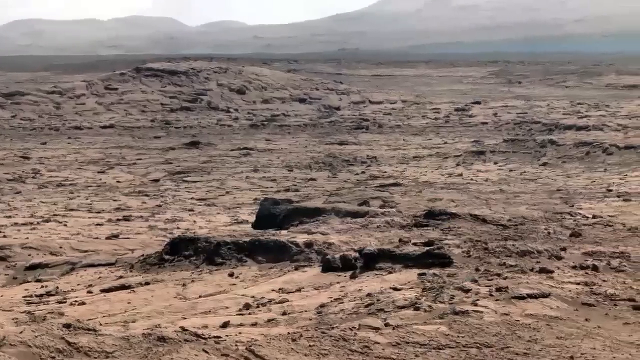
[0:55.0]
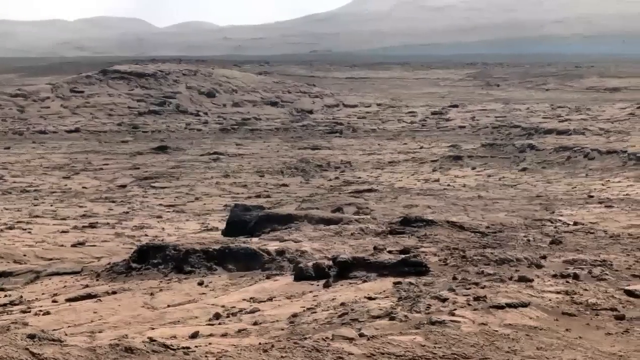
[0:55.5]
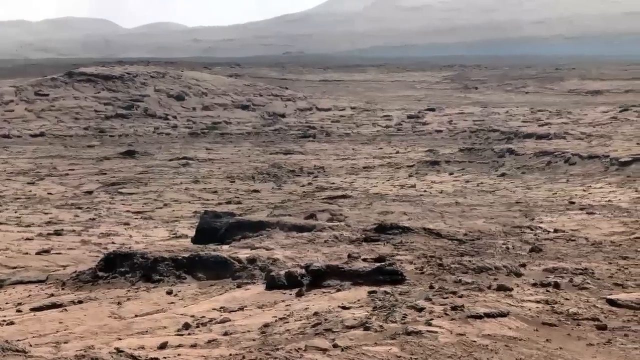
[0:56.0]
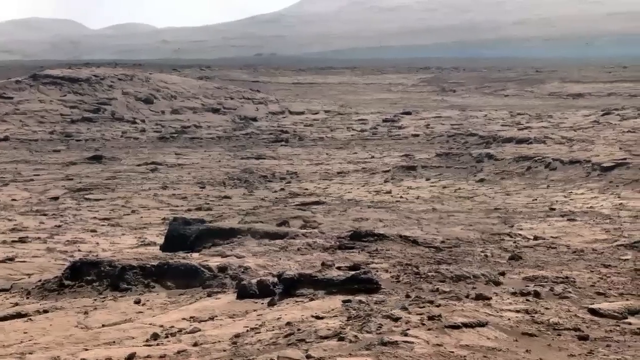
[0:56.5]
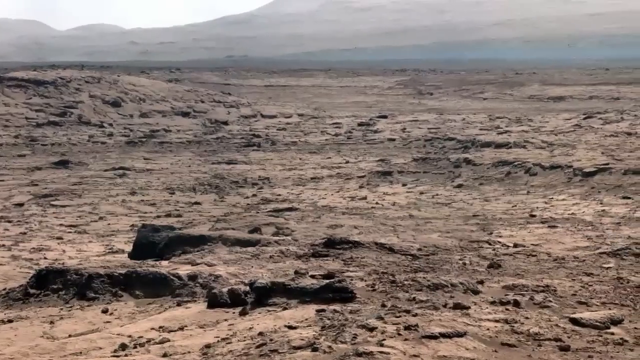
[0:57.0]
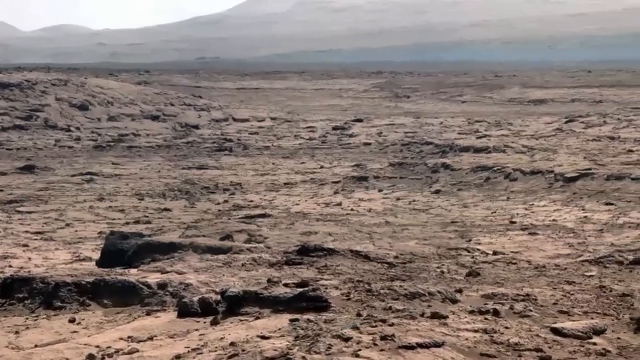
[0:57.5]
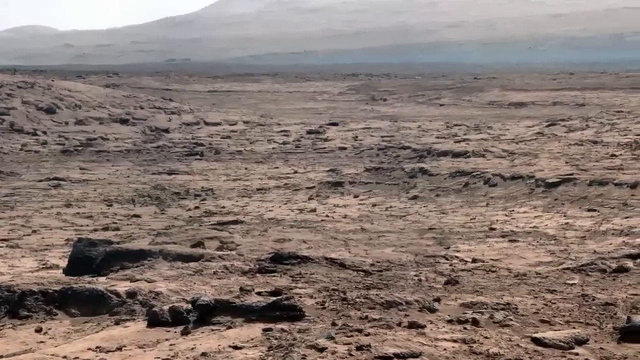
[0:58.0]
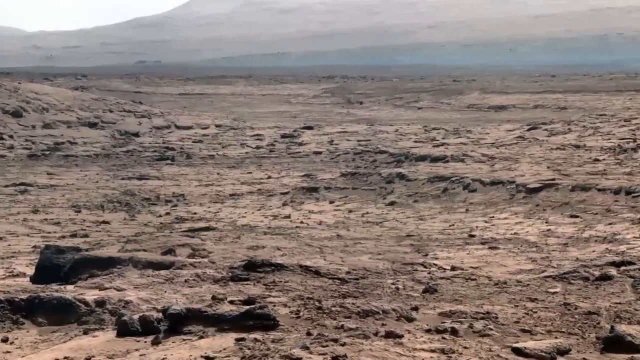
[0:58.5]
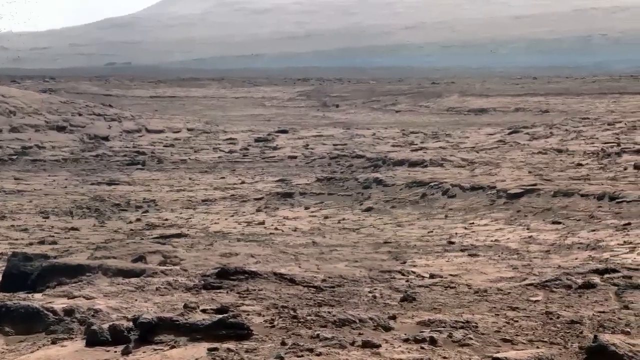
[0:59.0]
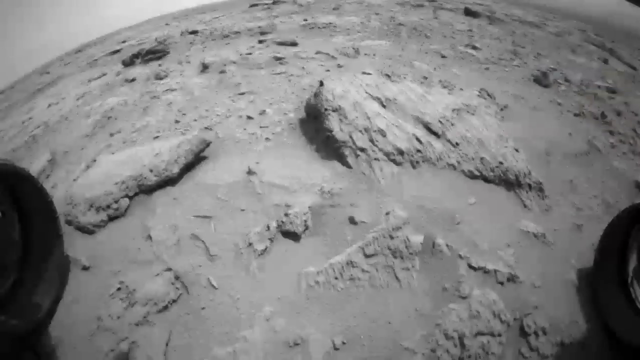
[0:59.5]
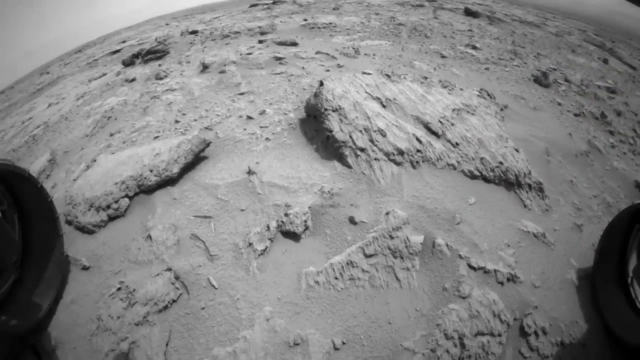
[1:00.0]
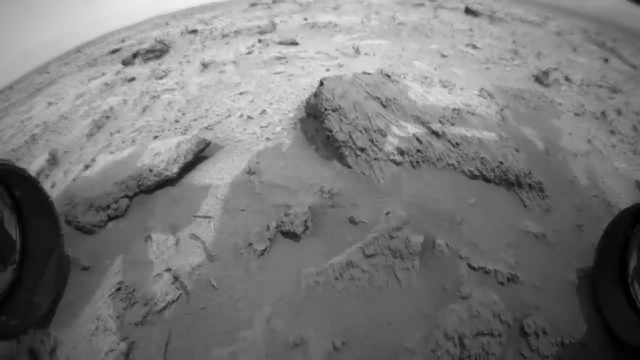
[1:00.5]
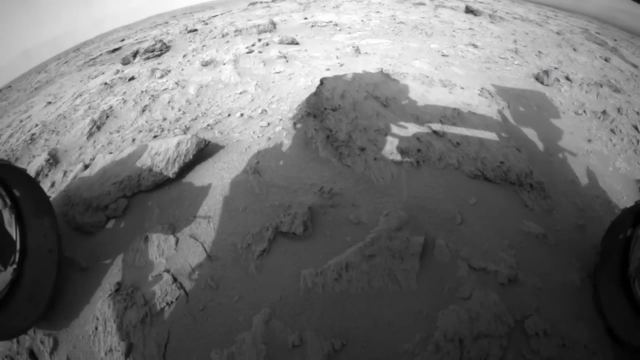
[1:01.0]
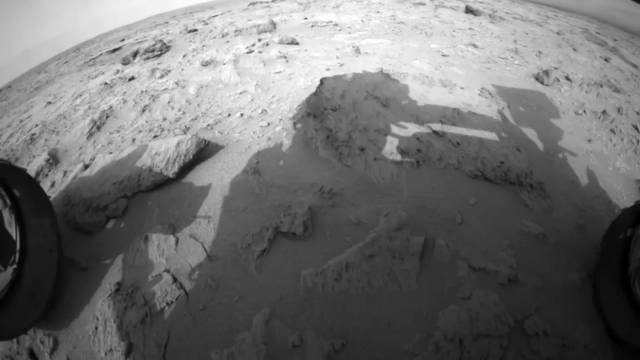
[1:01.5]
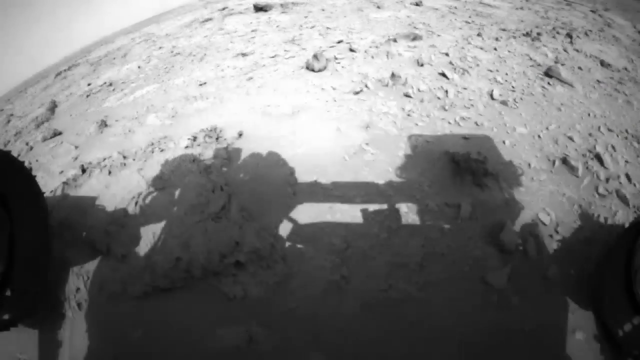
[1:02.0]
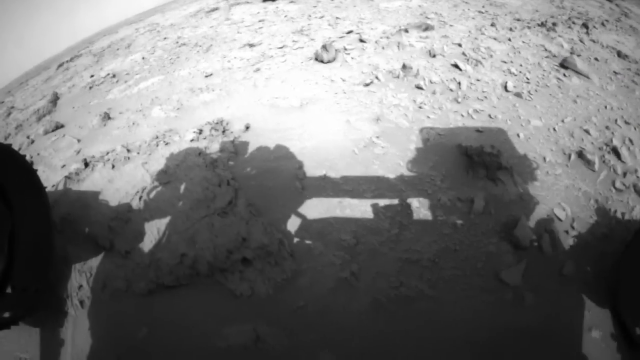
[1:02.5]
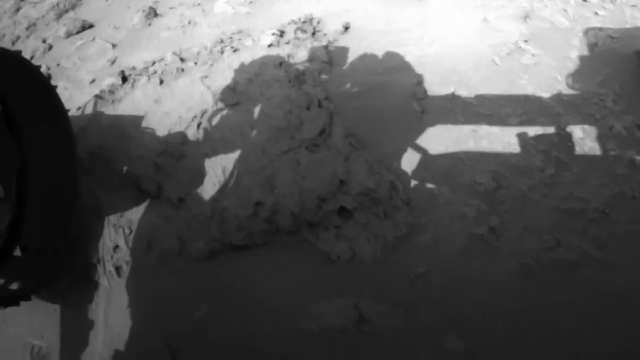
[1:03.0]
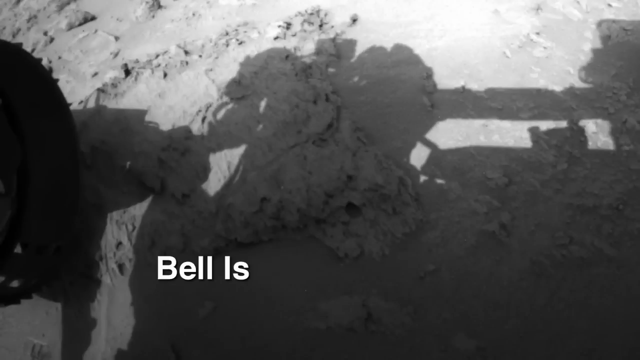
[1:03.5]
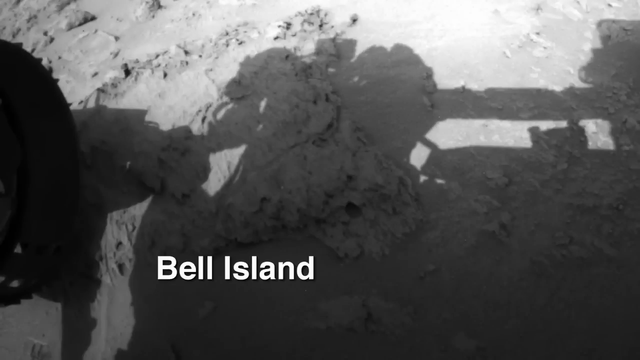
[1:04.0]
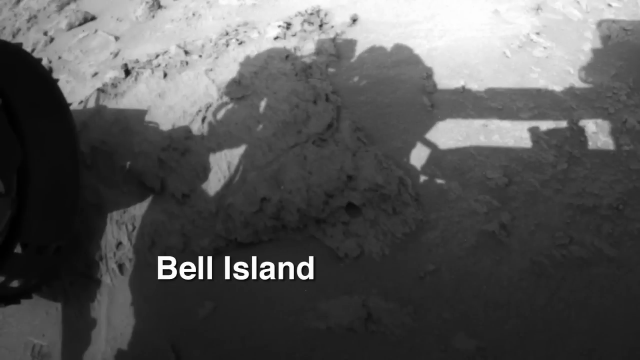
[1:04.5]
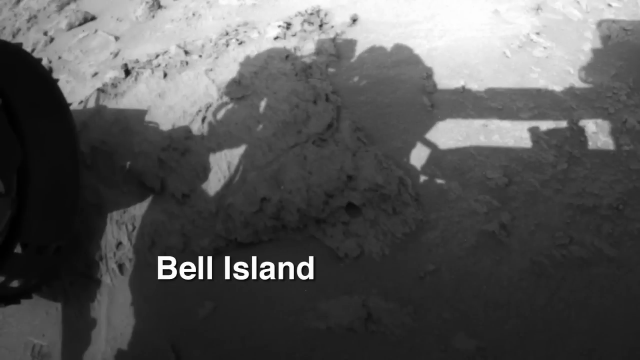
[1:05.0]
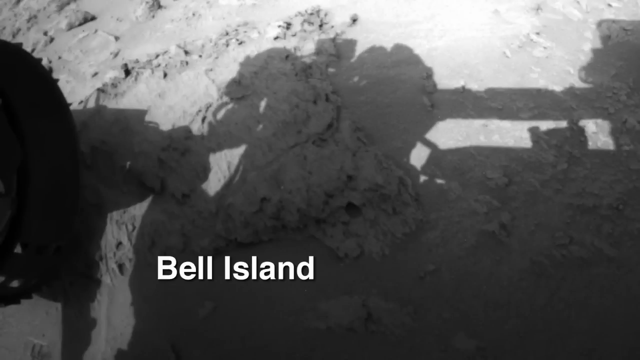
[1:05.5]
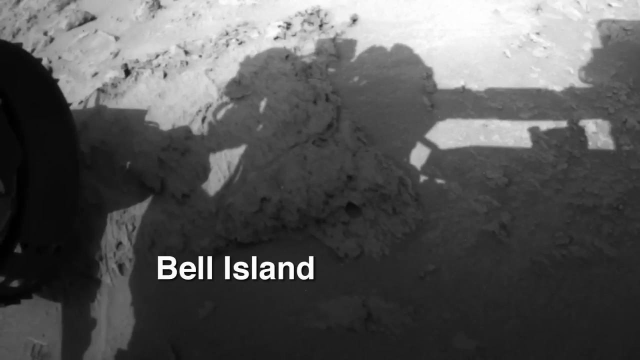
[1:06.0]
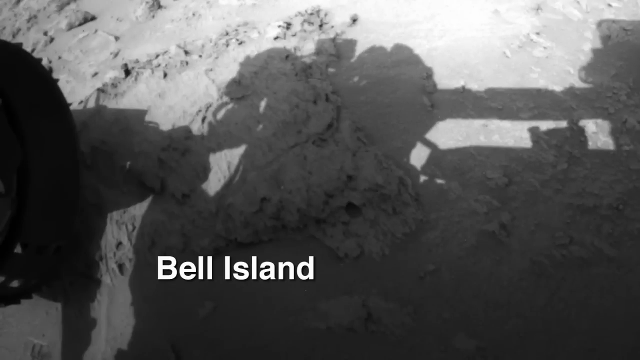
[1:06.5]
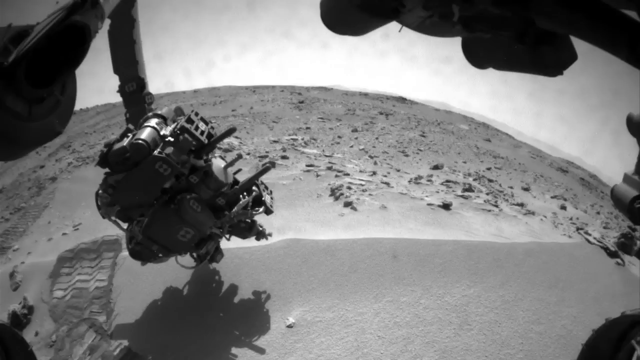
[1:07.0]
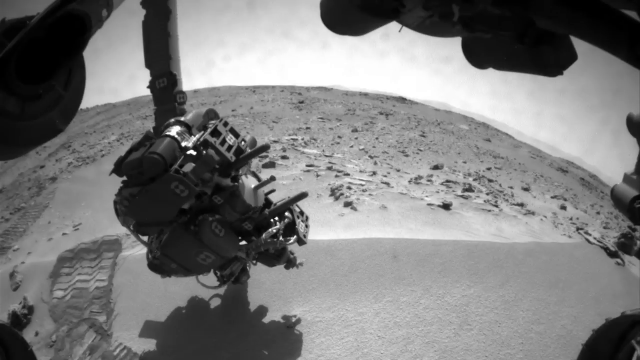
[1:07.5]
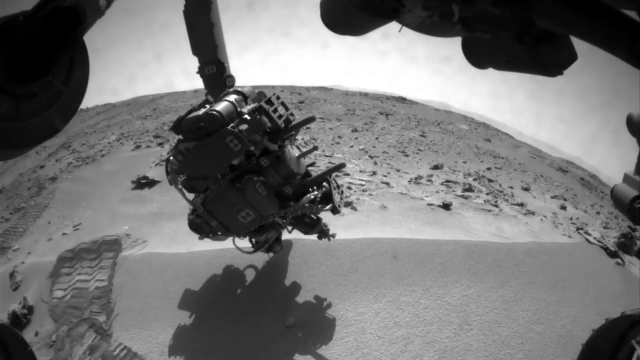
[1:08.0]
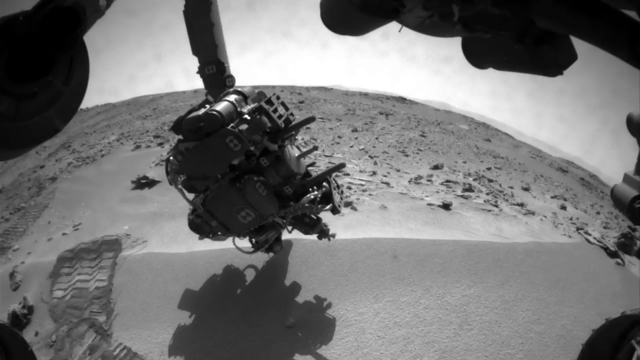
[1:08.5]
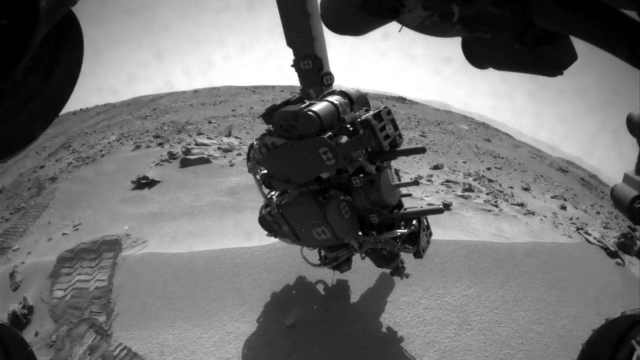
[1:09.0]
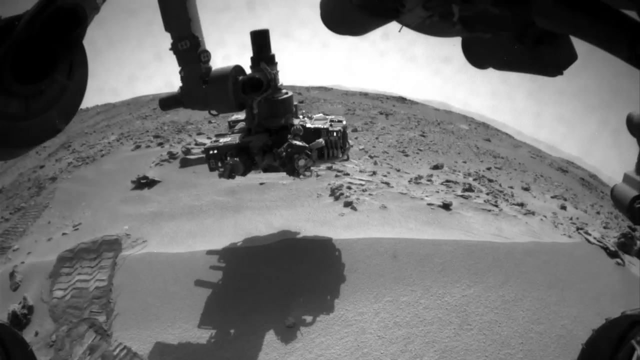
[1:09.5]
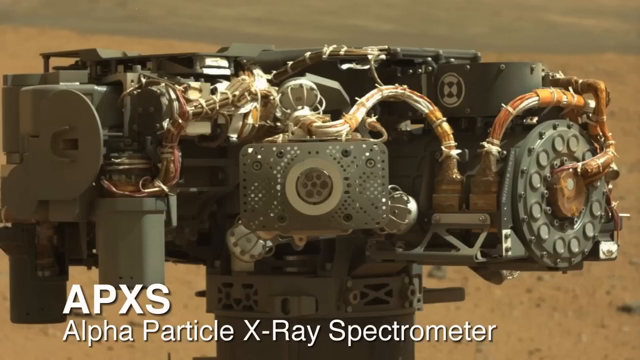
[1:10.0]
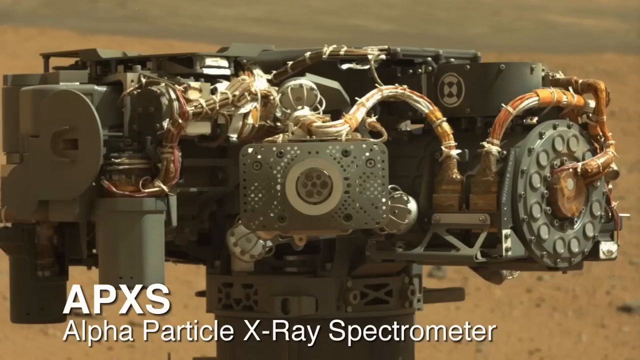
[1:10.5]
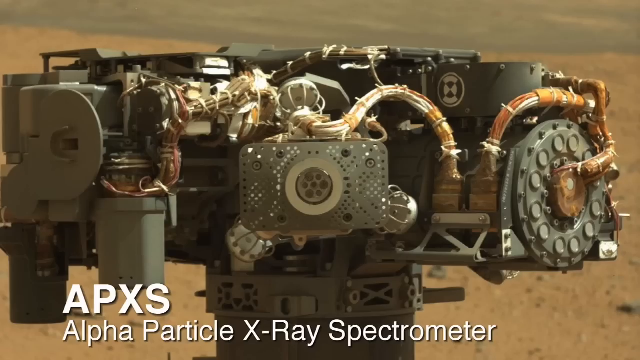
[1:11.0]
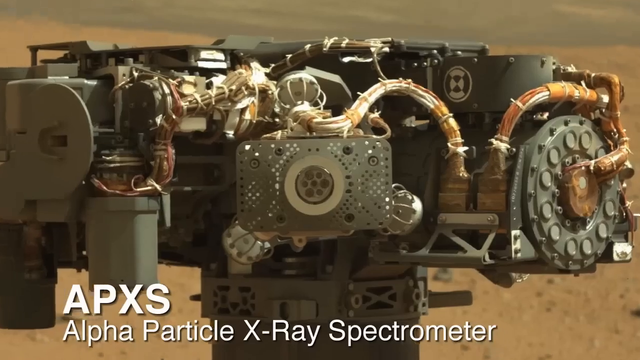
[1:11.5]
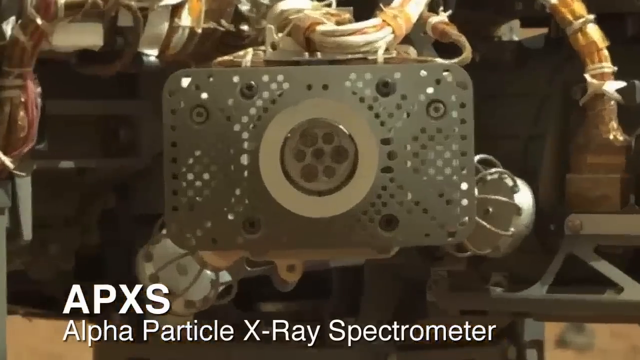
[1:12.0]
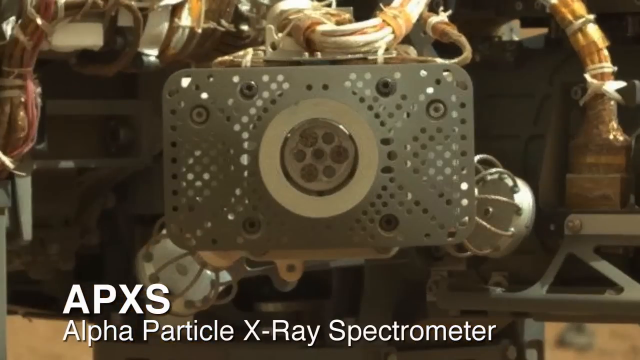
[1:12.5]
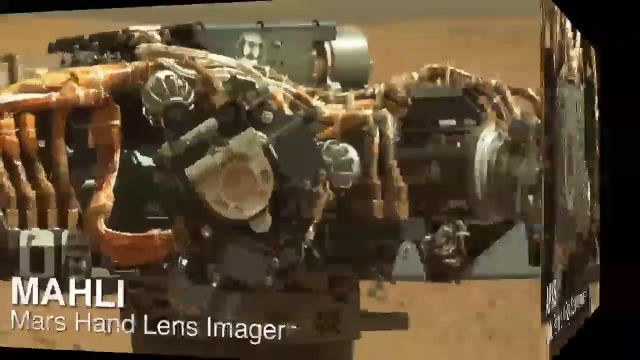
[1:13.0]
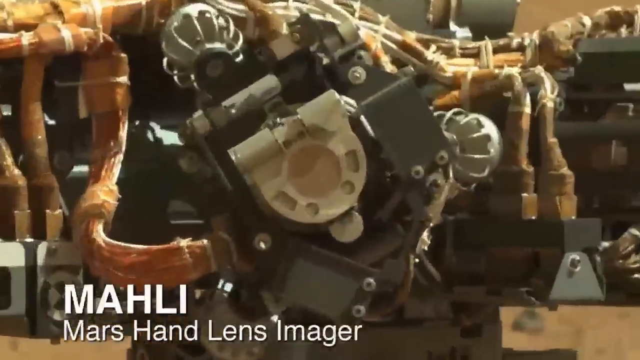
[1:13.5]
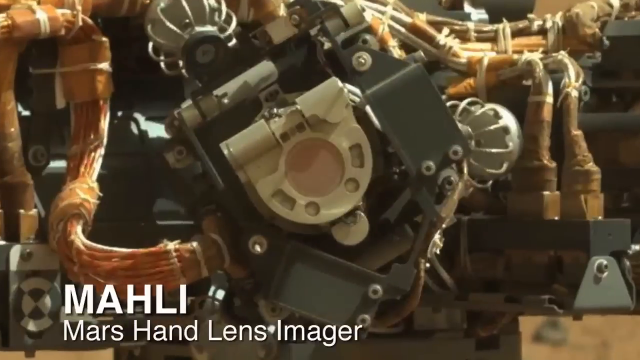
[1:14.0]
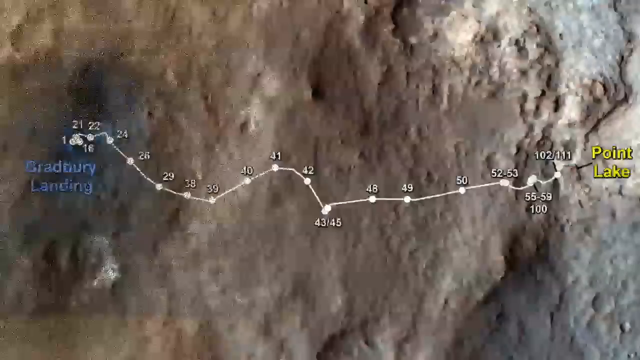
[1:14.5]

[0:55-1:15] More footage of Mars appears. The shadow of one of the rovers is seen, so the footage is from the rover, followed by close-ups of the rover itself. The landscape of a flat plateau appears, then the rover's shadow in black and white with "Bell Island" on it. The camera moves, and there is a close-up of the APXS and the MAHLI with some words on the screen. The shadow of the rover is on a dusty Mars surface, then the camera is shown with the surface below it, and the shadow of the camera is visible as it moves. Some close-ups are in color. The sequence is very fast, with little to take in from each shot. On-screen text reads "alpha particle x-ray spectrometer" for APXS and "Mars hand lens imager" for MAHLI; these are on the camera, shown very quickly.